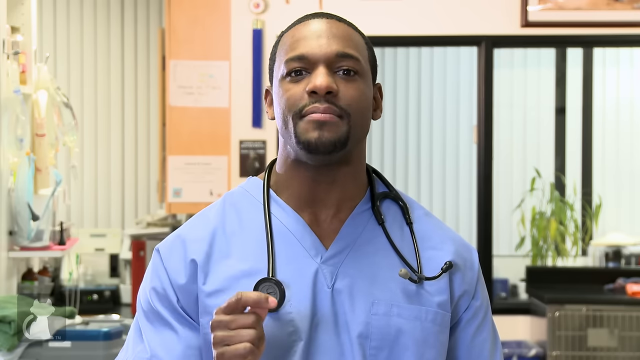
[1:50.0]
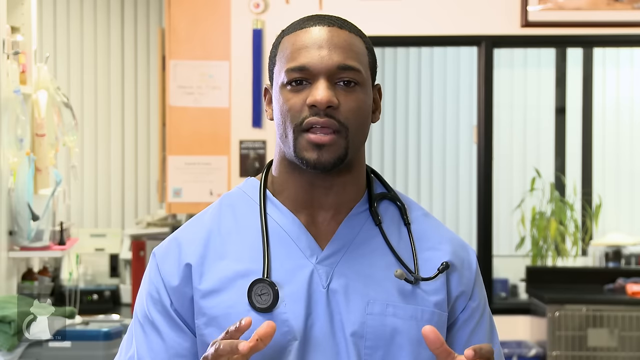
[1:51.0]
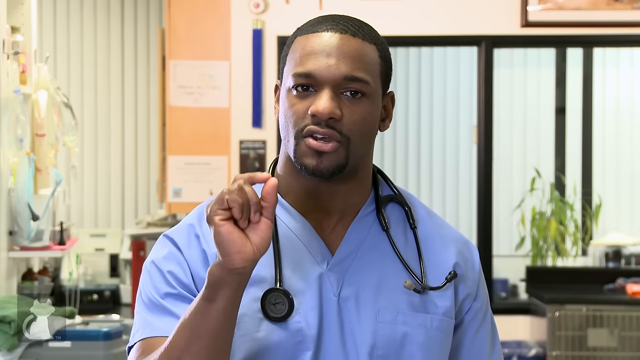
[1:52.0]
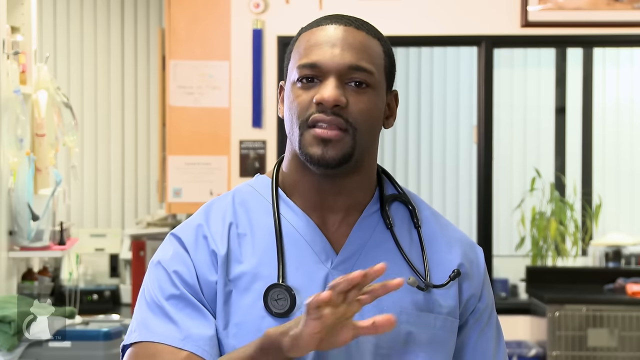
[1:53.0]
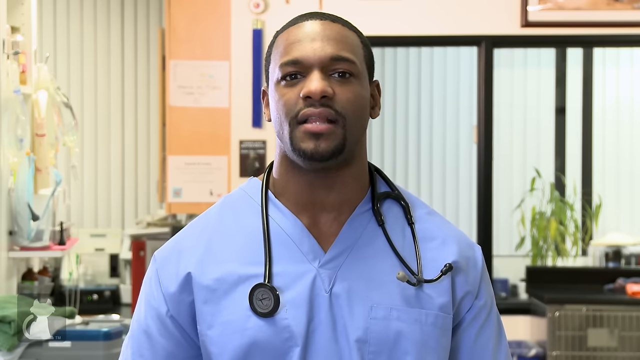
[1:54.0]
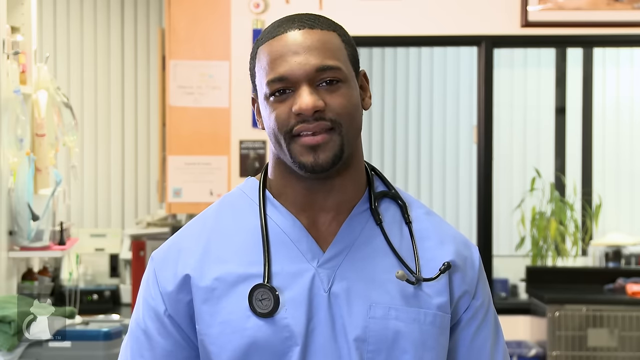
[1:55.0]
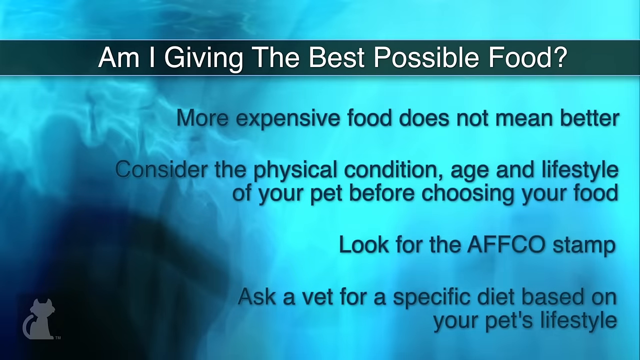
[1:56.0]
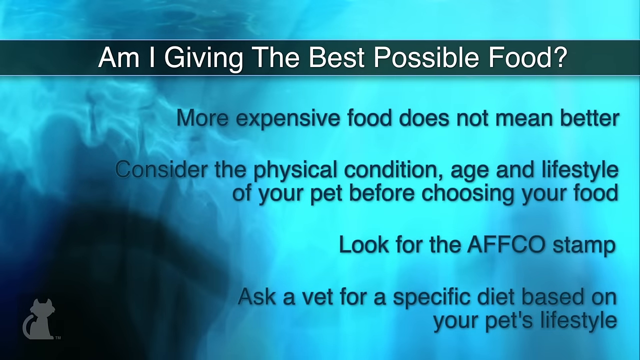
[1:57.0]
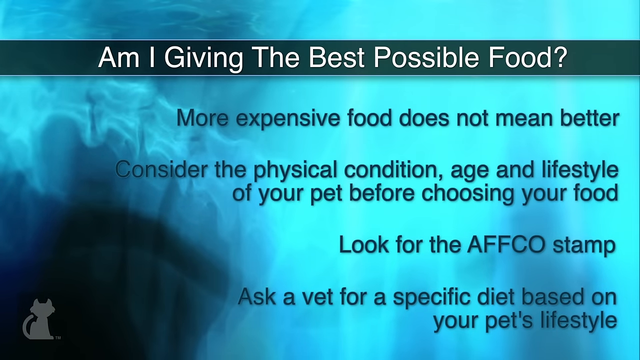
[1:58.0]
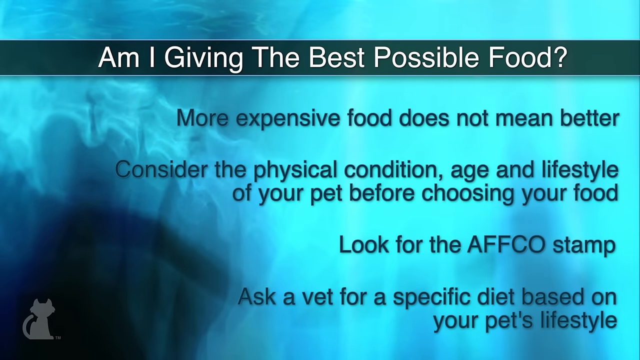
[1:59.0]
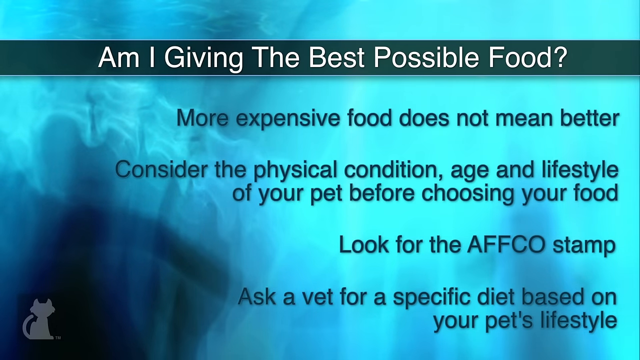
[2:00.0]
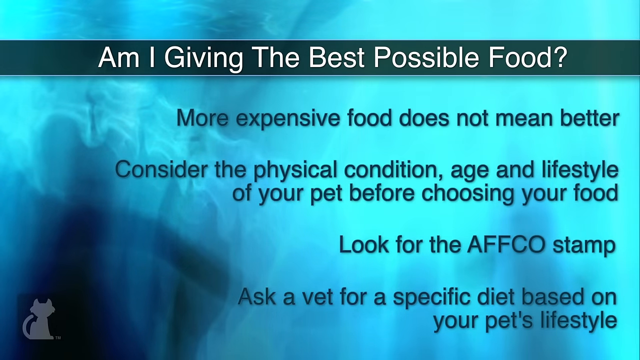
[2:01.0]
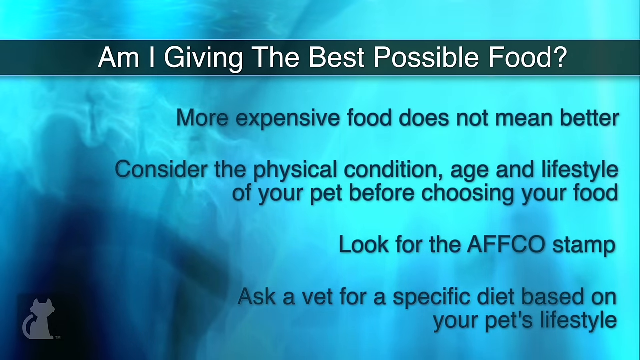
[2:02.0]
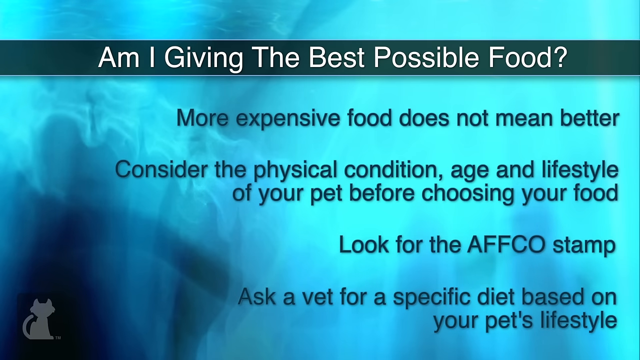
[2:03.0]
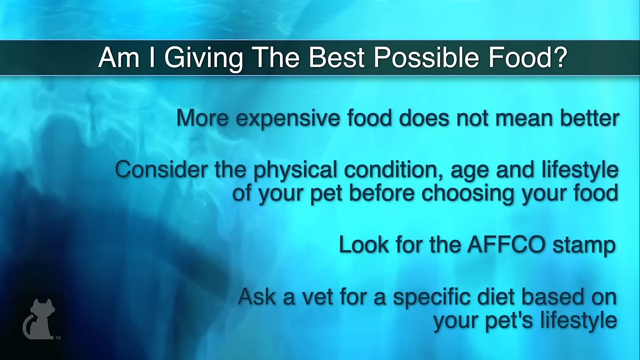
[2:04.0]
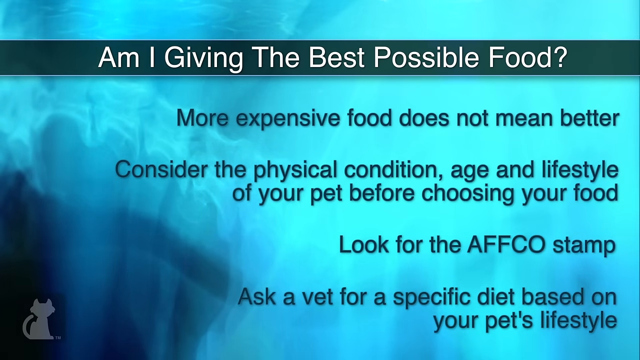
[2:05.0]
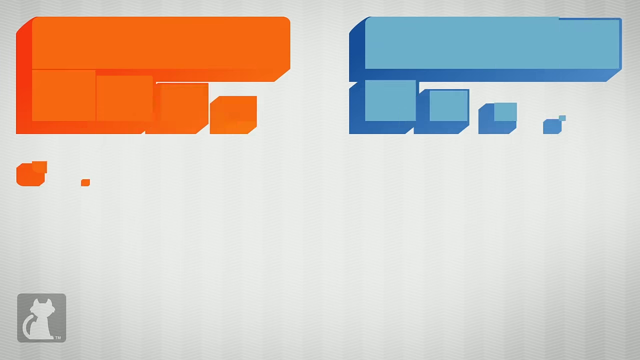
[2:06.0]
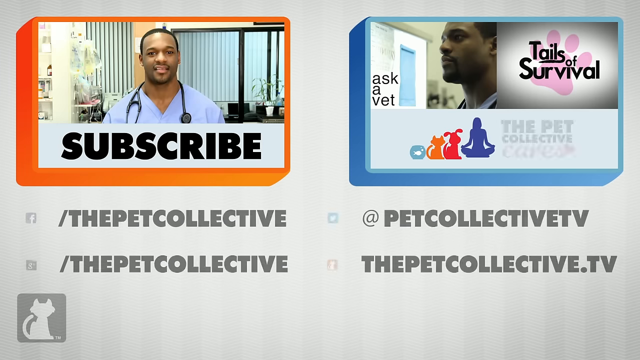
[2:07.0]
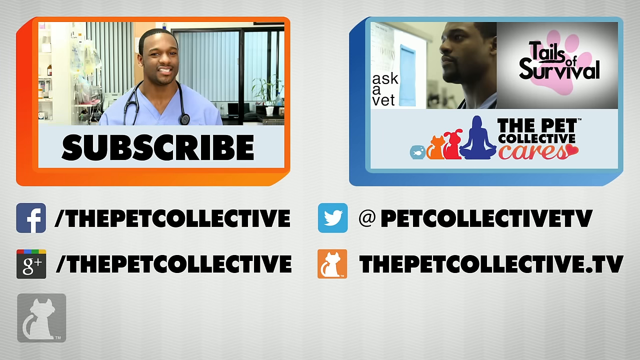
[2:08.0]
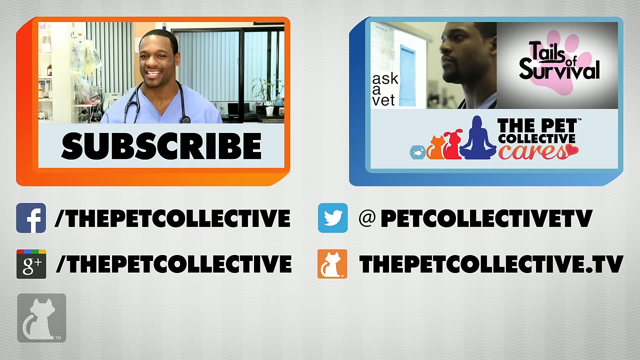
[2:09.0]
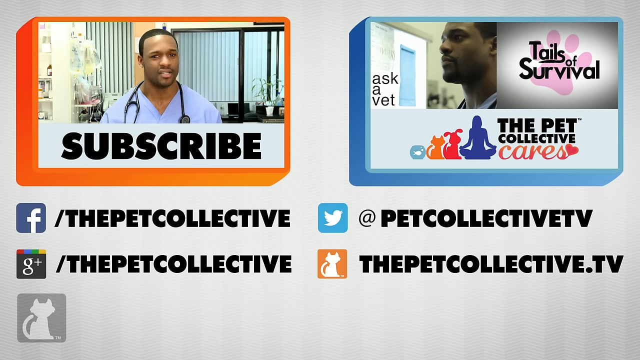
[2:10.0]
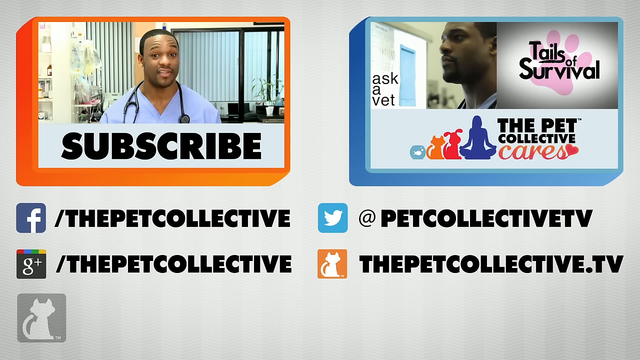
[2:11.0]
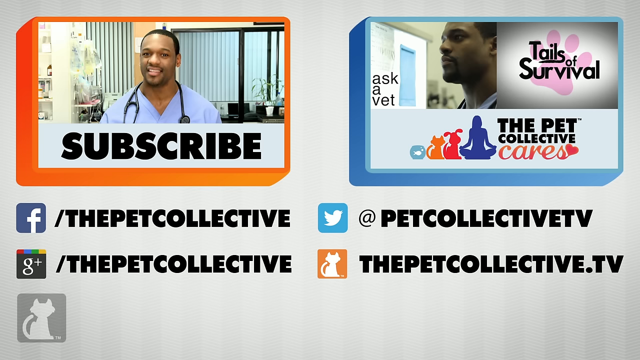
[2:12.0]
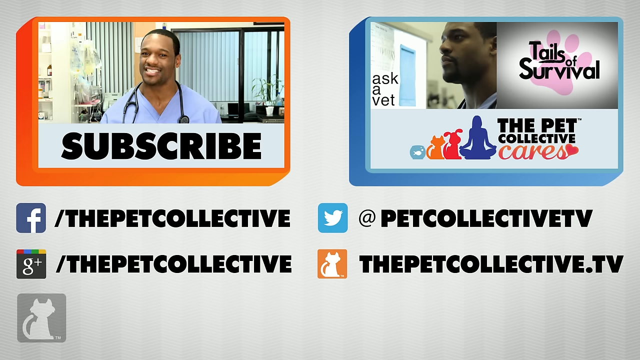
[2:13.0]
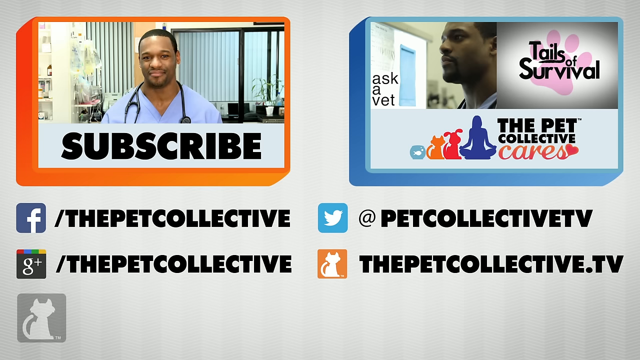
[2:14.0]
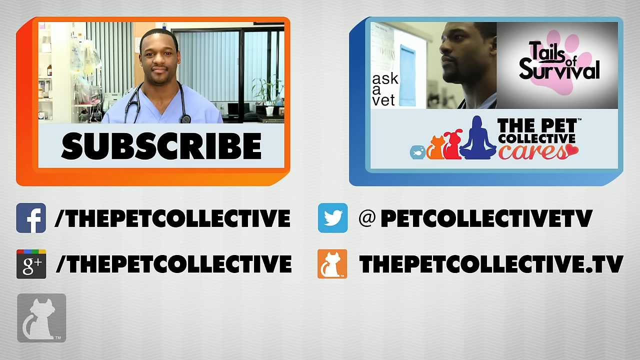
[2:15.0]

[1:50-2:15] A man is framed from the head down to the chest. He is dressed in blue scrubs with a black stethoscope draped around his neck, and he is well-groomed, with close-cut hair and a very trim, stylish beard and mustache. He stands in his office with his back toward what looks like sliding doors or windows, with office drapes to the left and behind him beyond the windows or doors. As he speaks, he gestures holding the thumb and index finger of his right hand together, his hand raised slightly. He then lowers his hand and continues speaking, slightly nodding his head, and smiles a bit as the video comes to an end. A blue screen effect covers his image, and the screen transitions to a blue screen with text written across it: "Am I giving the best possible food?", "Consider the physical condition, age and lifestyle of your pets before choosing your food," "Look for the AAFCO stamp," and "ask a vet for a specific diet based on your pet's lifestyle."